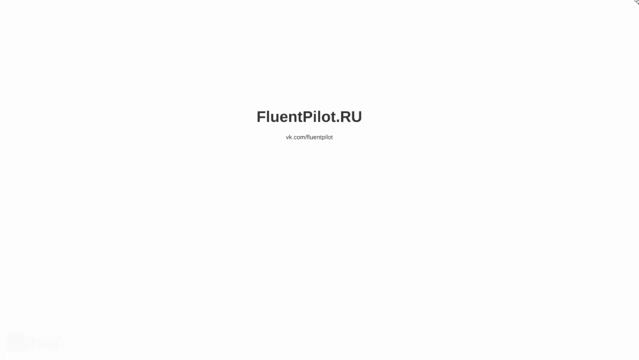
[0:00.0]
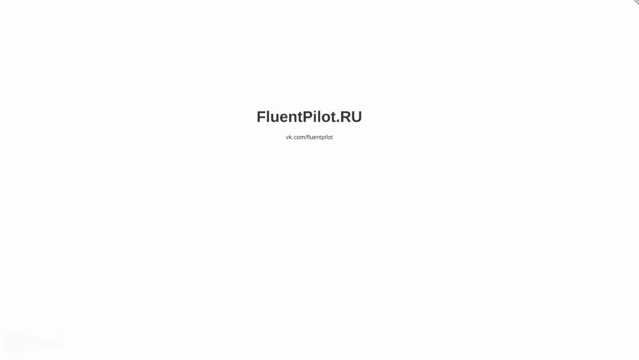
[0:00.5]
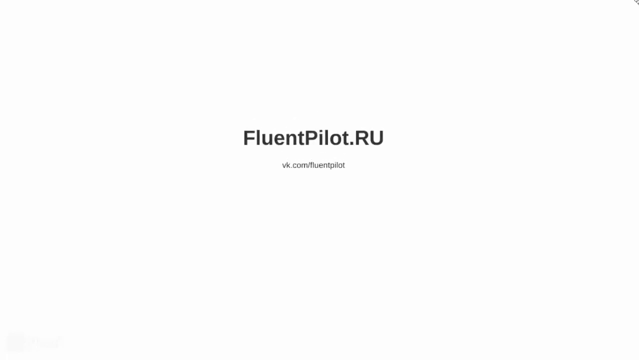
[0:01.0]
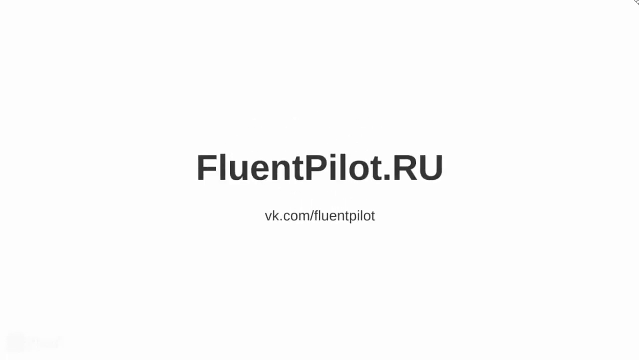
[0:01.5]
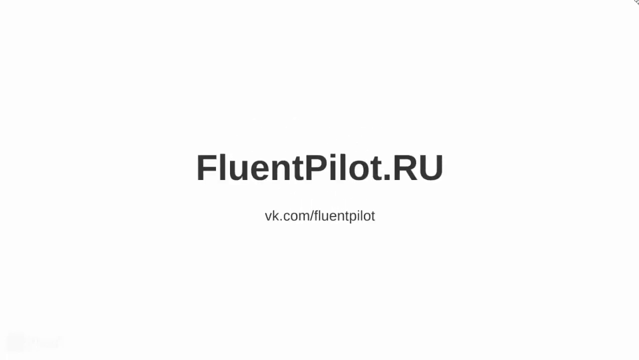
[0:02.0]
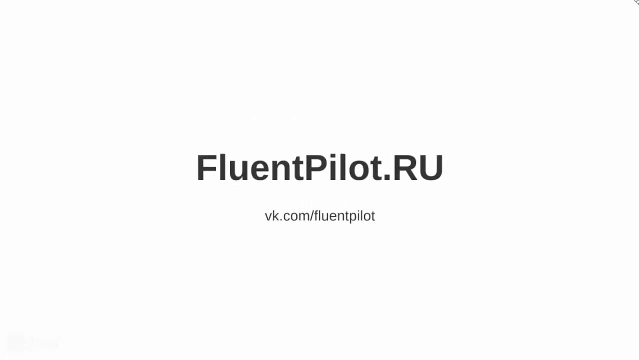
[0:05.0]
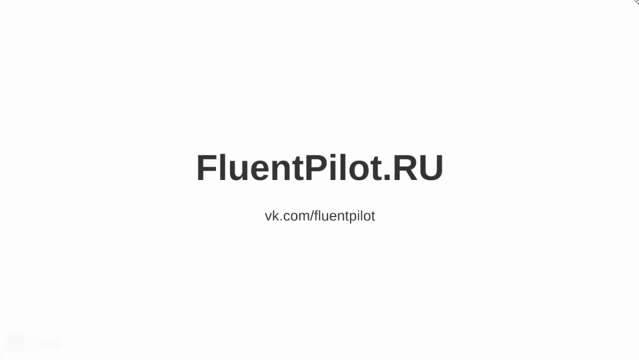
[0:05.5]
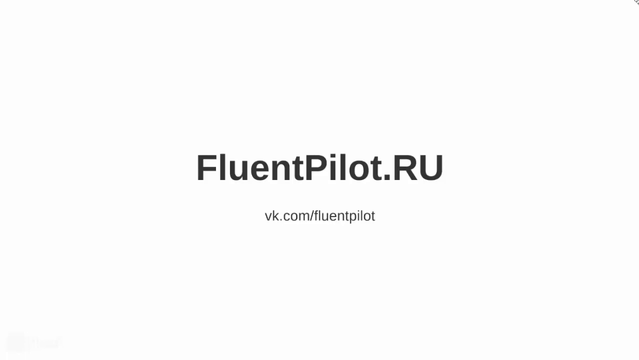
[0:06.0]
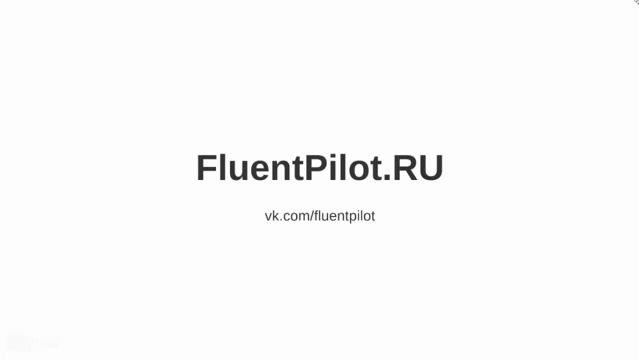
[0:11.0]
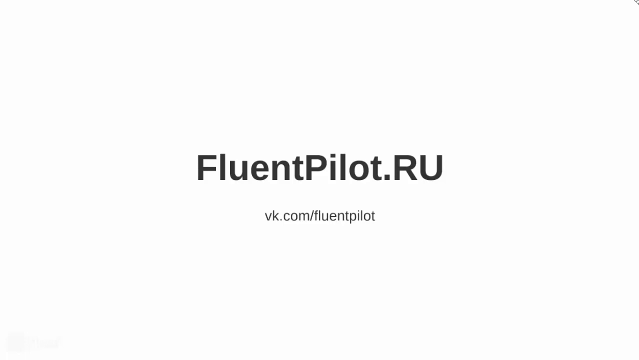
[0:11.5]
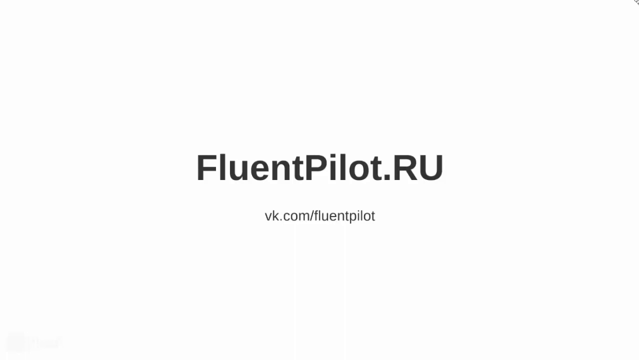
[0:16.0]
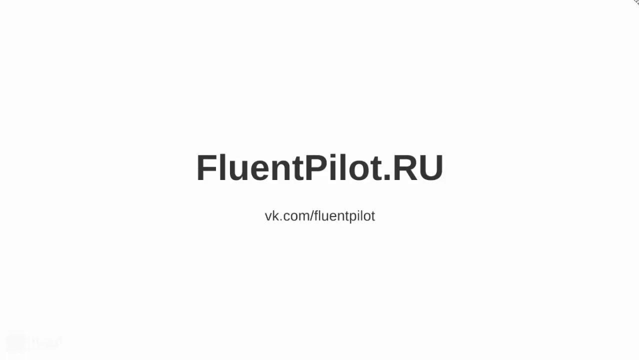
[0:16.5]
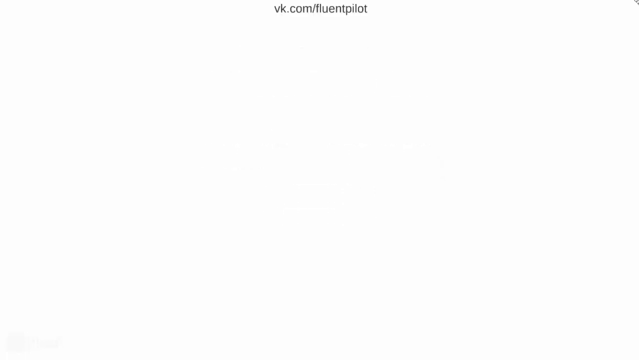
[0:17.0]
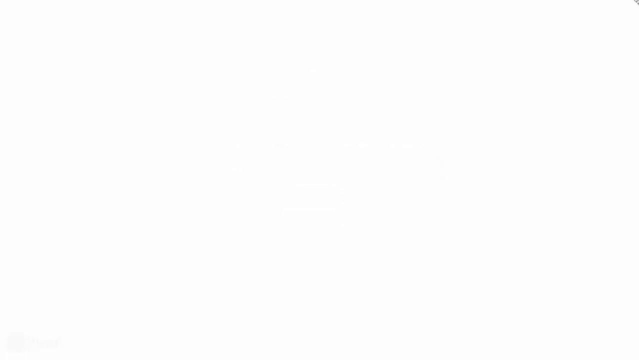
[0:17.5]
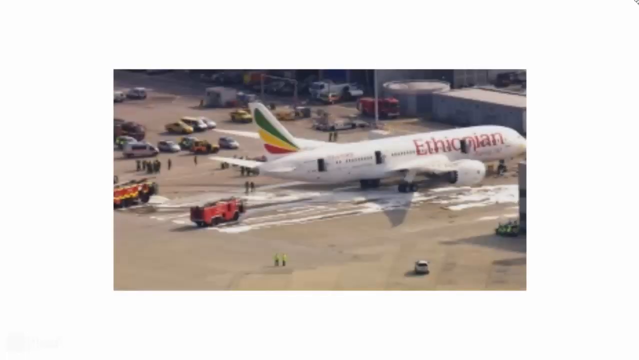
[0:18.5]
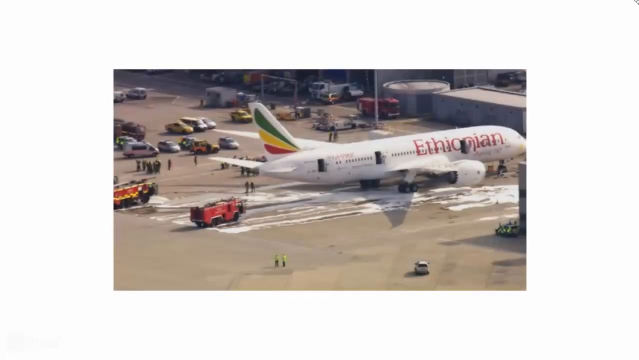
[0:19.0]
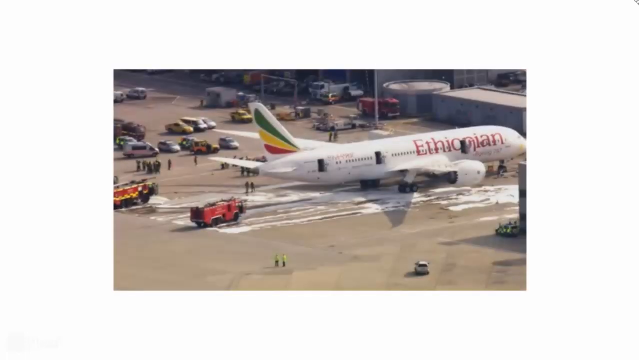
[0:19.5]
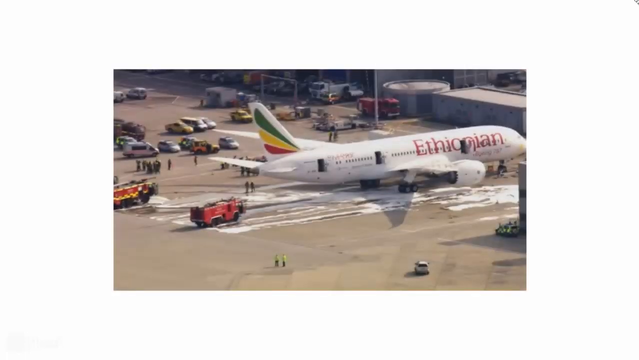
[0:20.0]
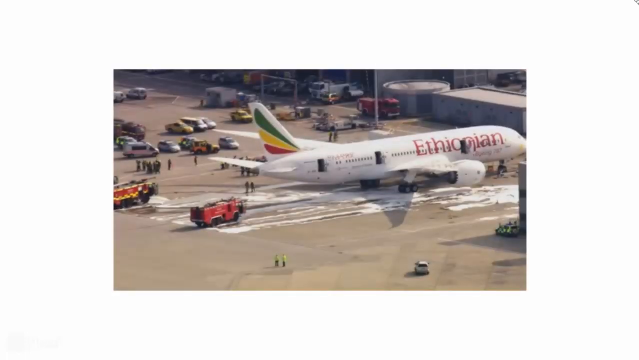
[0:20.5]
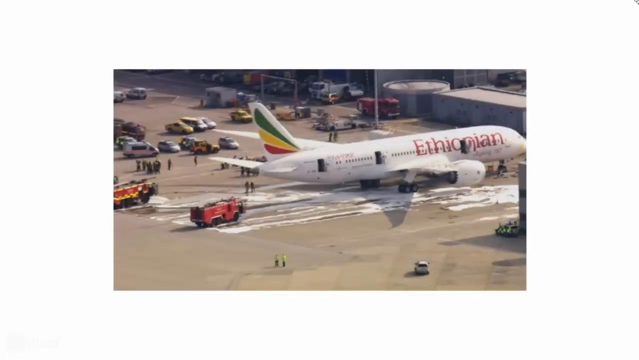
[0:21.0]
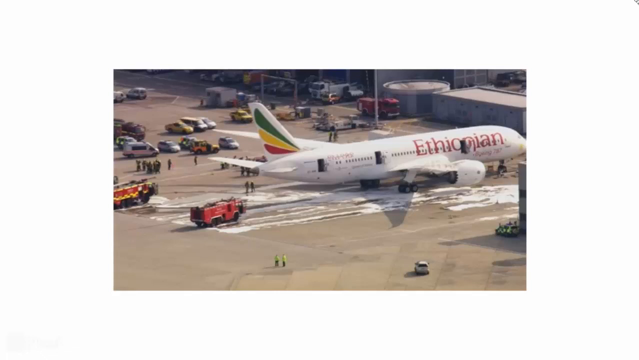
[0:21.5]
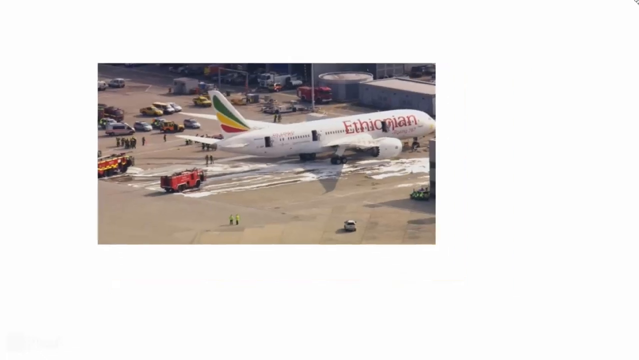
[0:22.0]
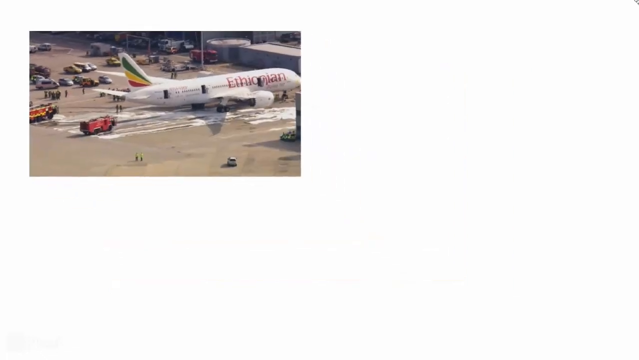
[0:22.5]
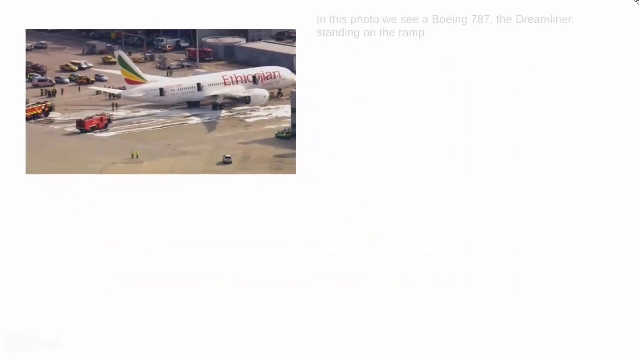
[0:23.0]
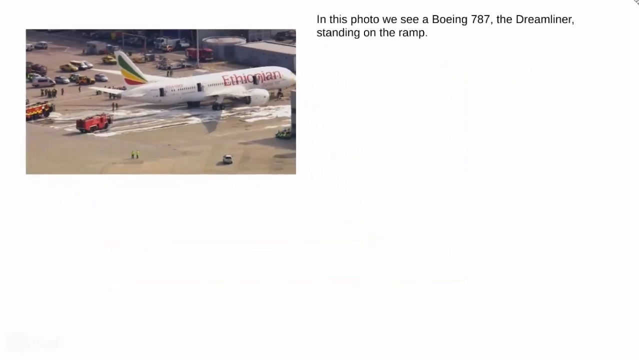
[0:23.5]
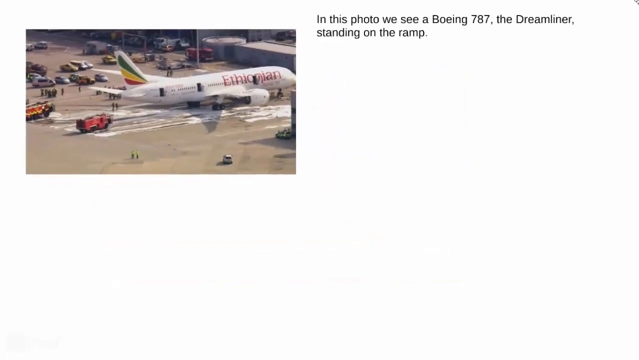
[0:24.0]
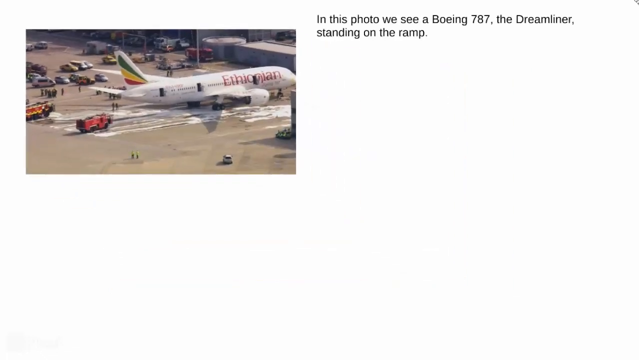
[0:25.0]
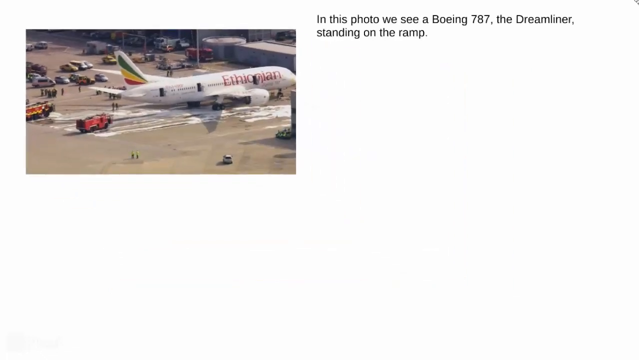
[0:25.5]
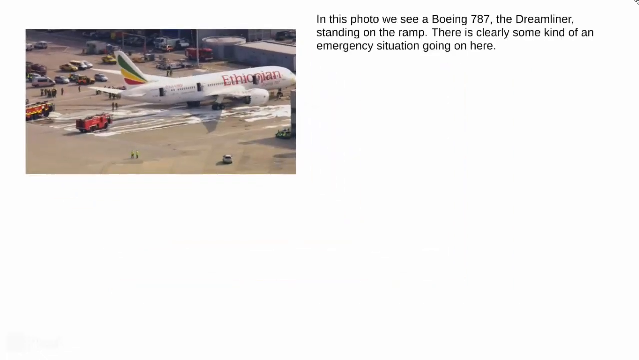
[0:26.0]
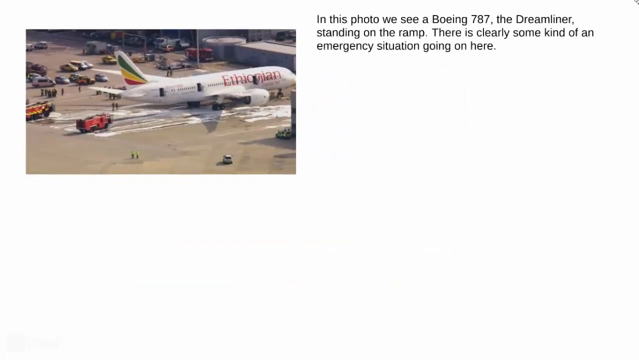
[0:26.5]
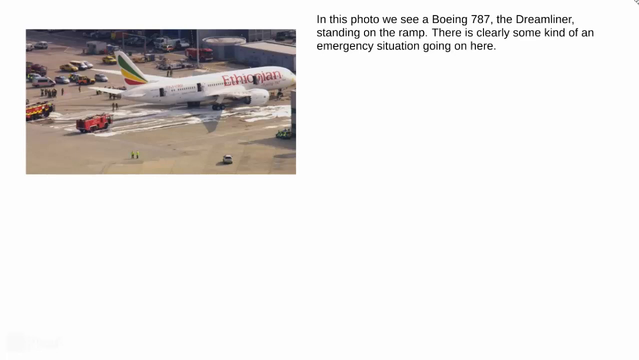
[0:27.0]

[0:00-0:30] An animation screen has a white background, and in the middle of the screen a few words in black read "fluentpilot.ru bk.com/fluentpilot". Next comes a picture of an airplane labeled "Ethiopian" in red. One of the back wings shows the Ethiopian colors: green, yellow and red. Around the plane there are a couple of vehicles and several people, as well as several buildings with rectangular and circular shapes. The picture is outdoors, with a good amount of natural light making everything clear and visible. No animals are present. The video is rectangular and of decent quality.